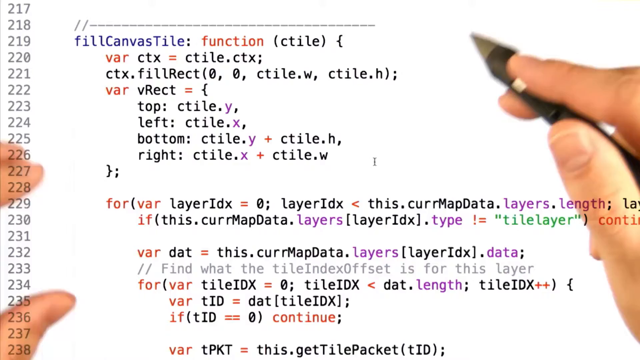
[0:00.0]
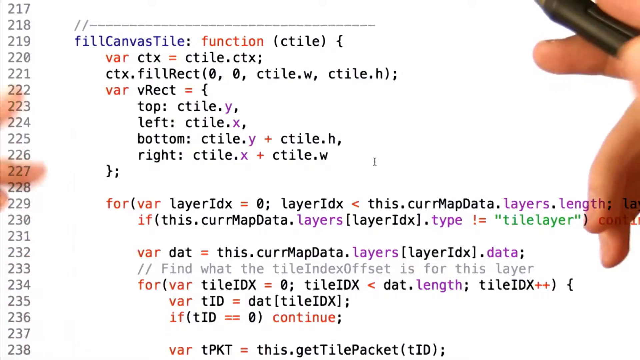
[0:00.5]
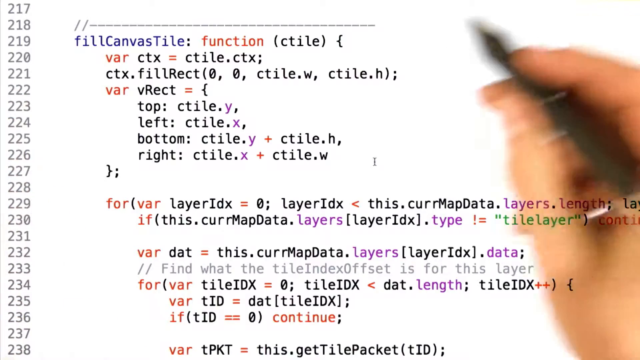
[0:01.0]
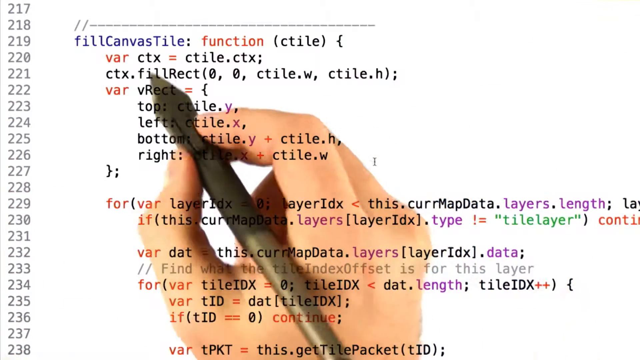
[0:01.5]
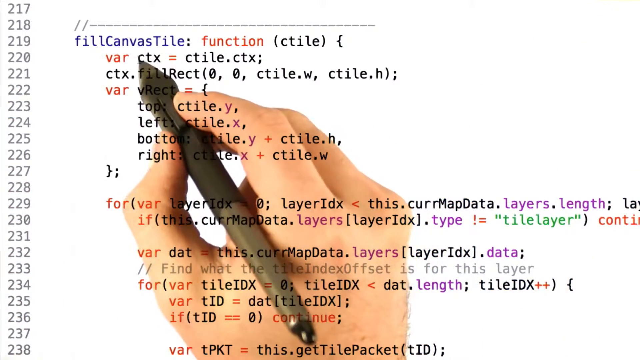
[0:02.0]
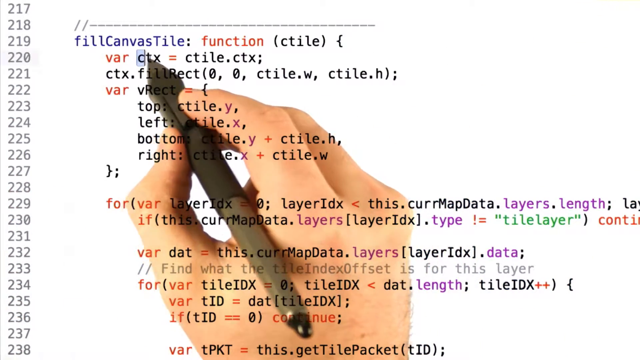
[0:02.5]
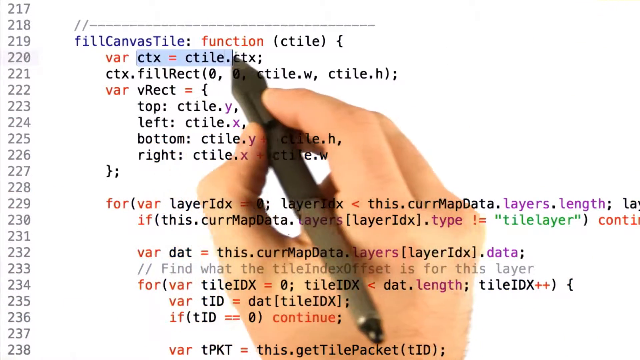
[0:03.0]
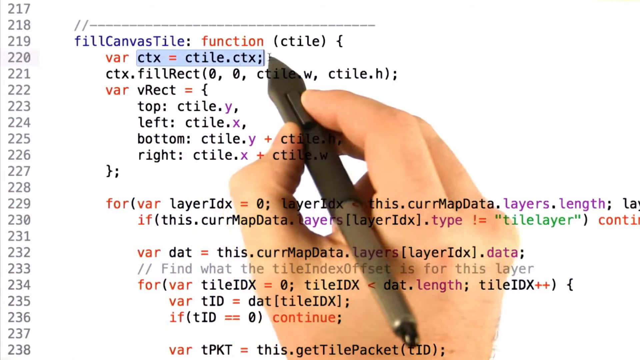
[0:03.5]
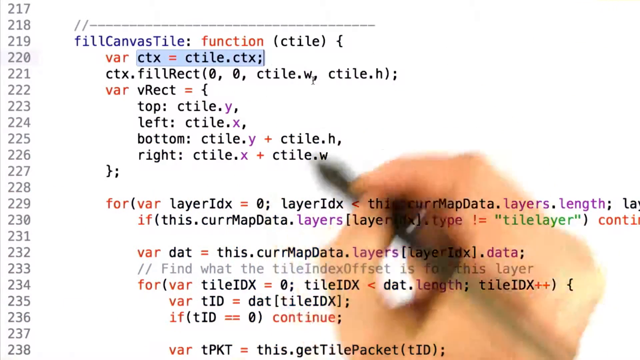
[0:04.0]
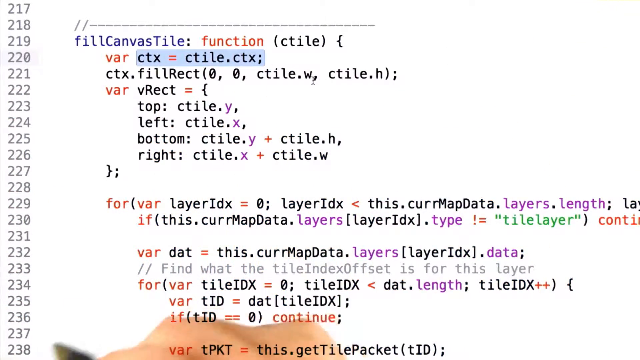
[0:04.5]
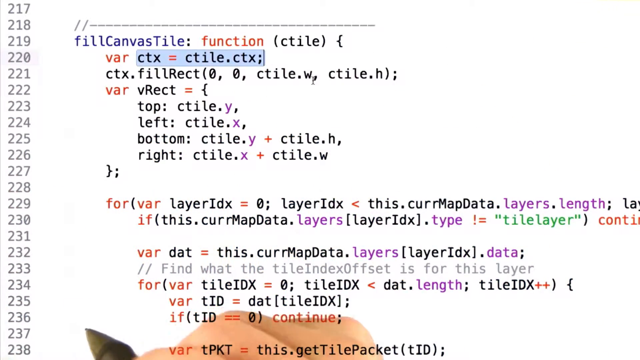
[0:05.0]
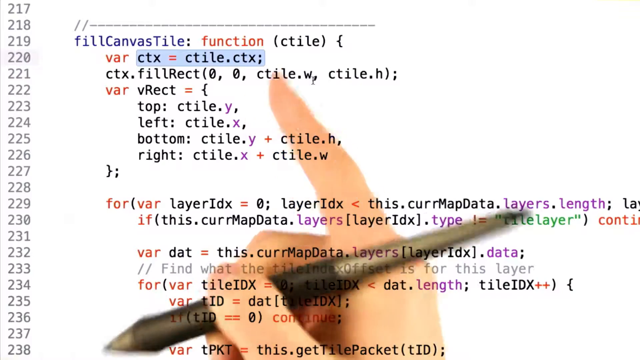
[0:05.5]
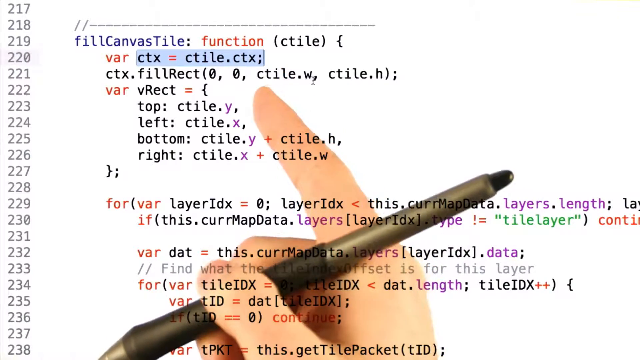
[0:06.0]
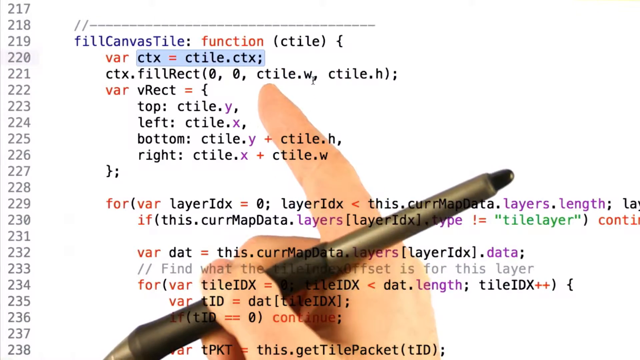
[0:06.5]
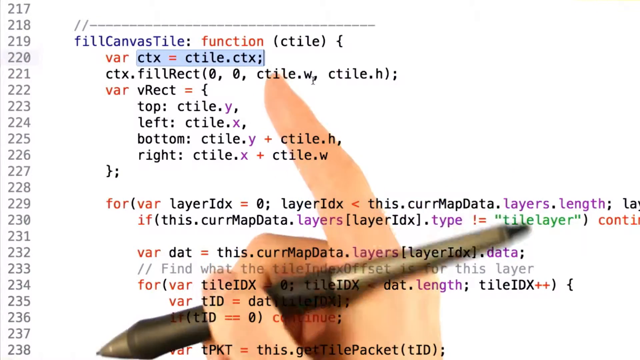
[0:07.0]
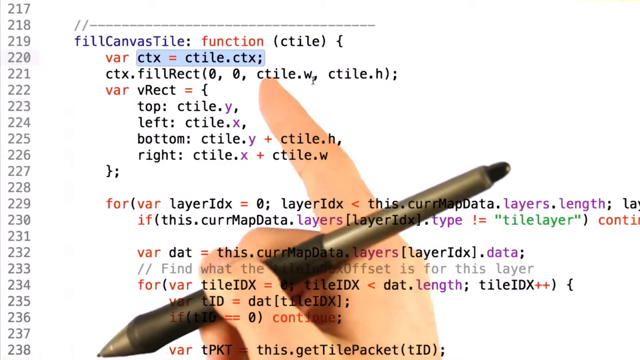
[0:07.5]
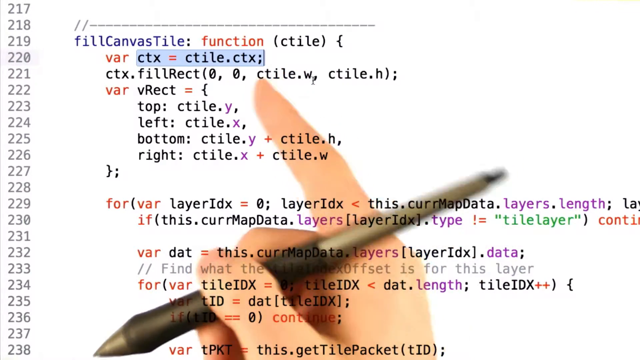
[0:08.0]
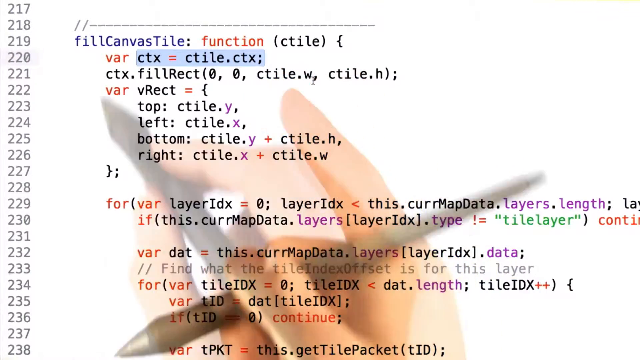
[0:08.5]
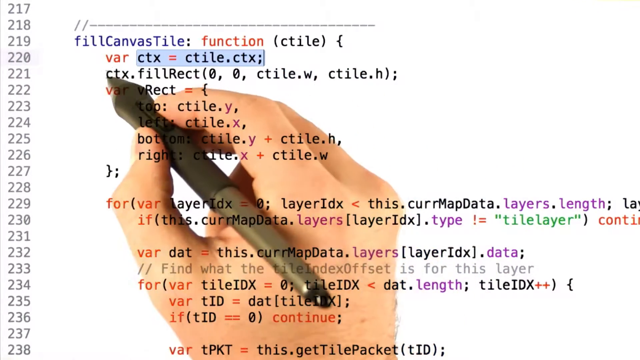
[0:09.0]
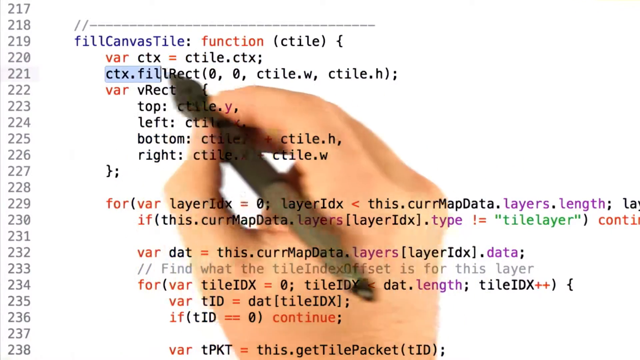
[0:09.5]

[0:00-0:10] Multicolored text appears on a translucent screen, with a light blue highlight moving across it. What it is remains unclear, though it seems to be some kind of code. Words visible include "canvas", "tile", "function", "layers" and "map data", repeated, and line numbers from 217 to 234 run down the side next to the code. A pen moves around the screen, but from behind the screen, creating a neat effect. The pen does not look like a highlighter, but apparently it is one. The hands look like male hands, clean and manicured.